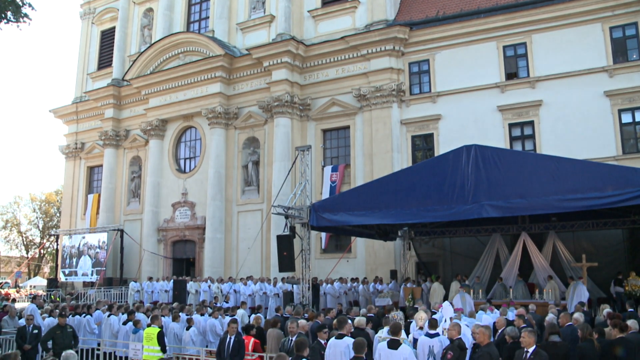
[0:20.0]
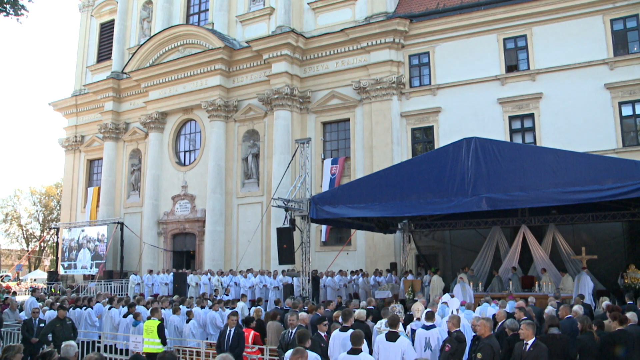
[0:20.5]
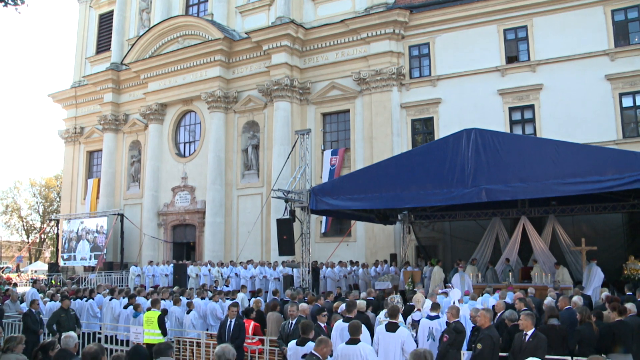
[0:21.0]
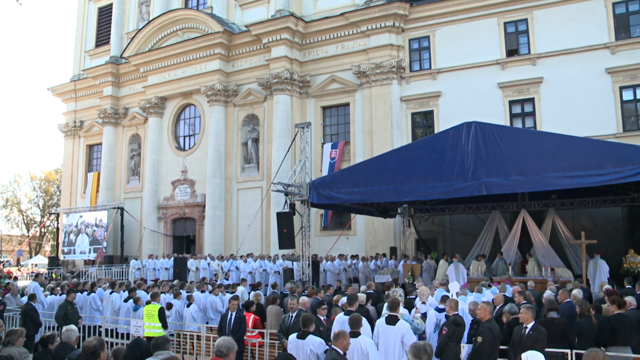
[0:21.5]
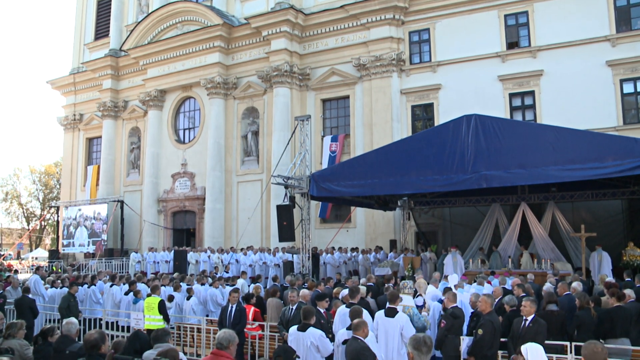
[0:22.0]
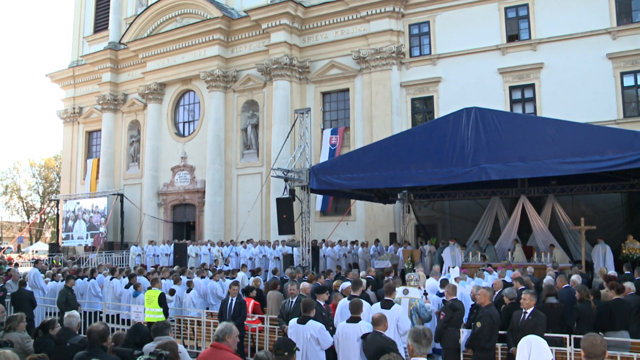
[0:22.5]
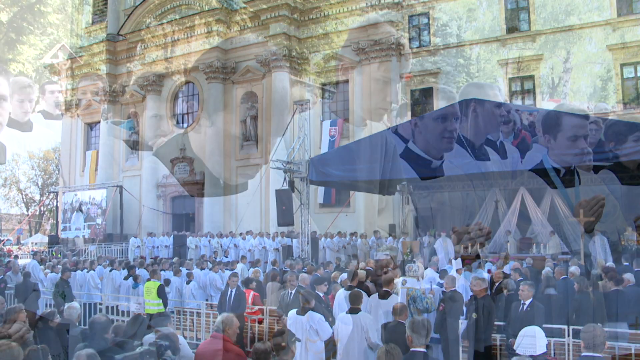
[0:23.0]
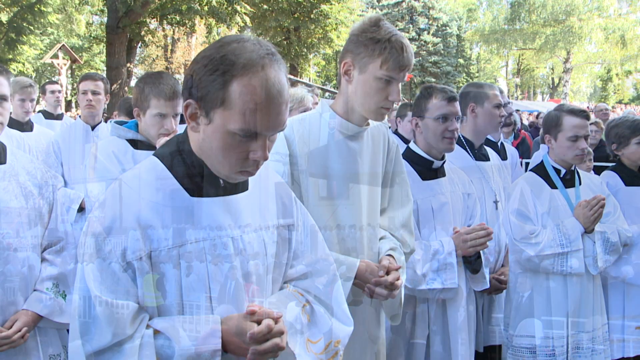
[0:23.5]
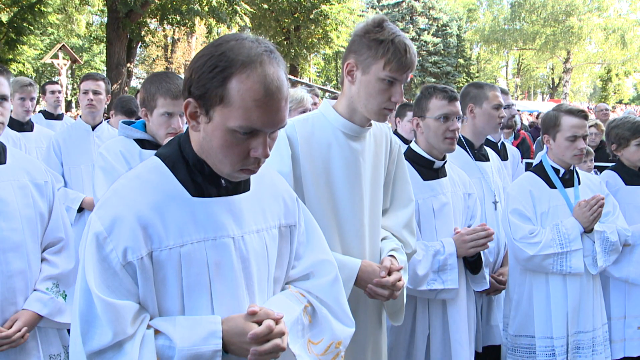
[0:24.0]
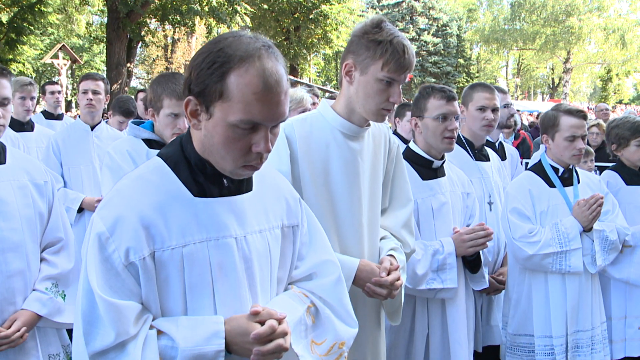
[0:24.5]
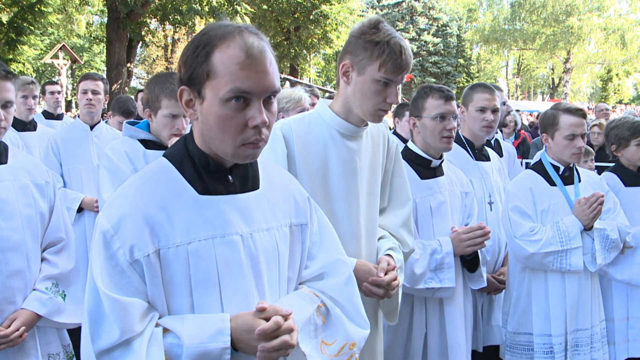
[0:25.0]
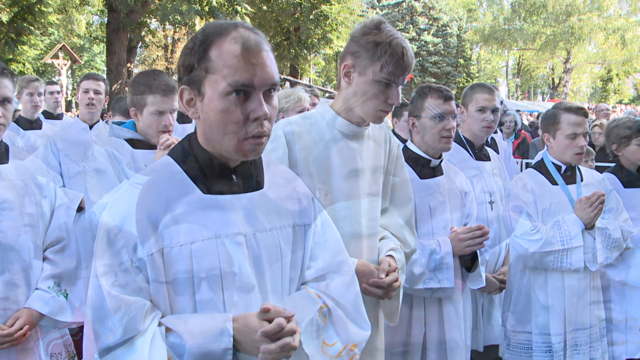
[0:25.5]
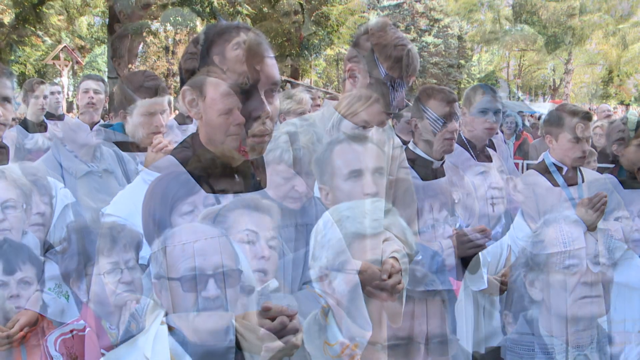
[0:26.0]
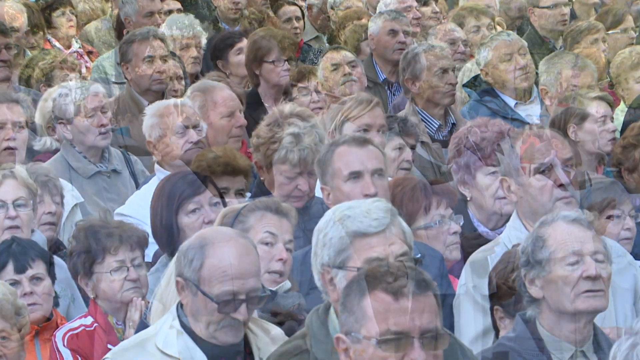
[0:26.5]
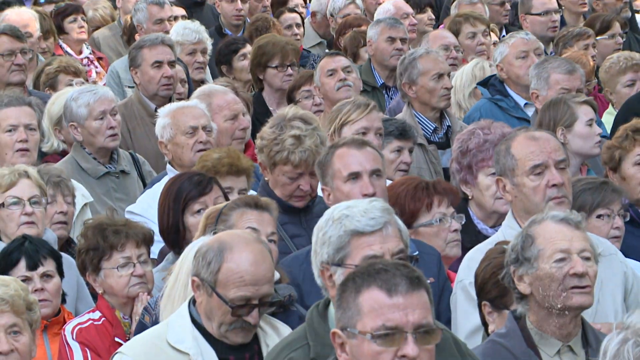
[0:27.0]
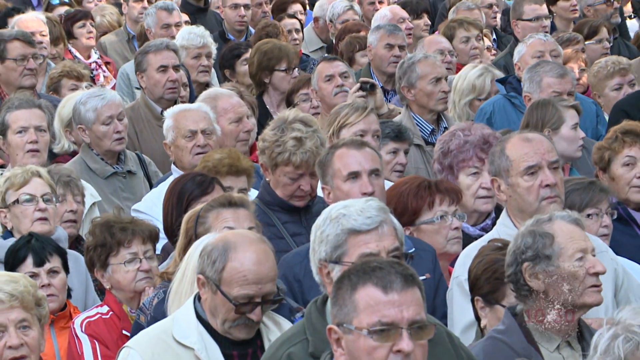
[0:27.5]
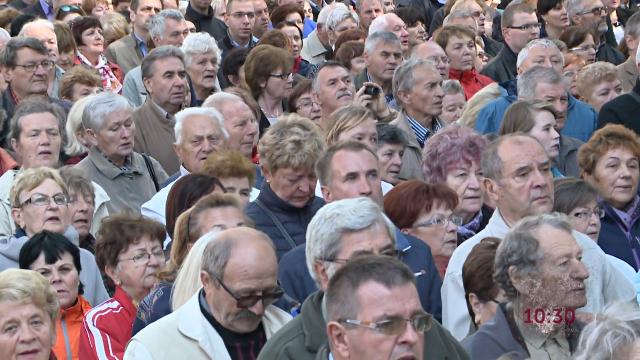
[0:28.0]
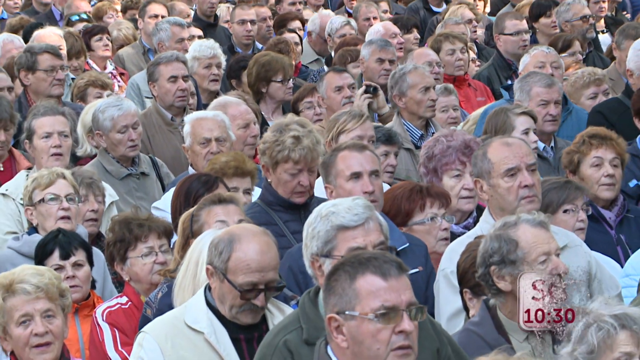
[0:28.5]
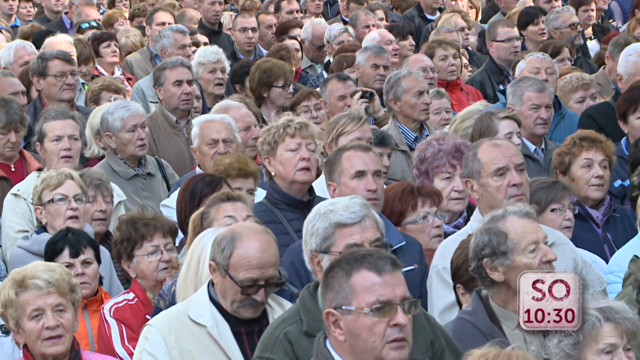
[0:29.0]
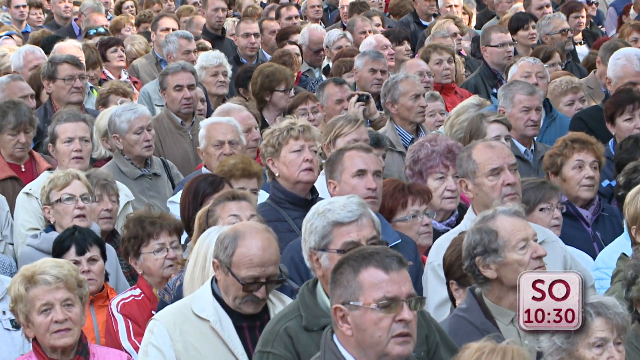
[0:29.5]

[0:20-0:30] The side of a really big building with at least three or four floors is visible; the windows are huge, leaving a lot of space from floor to ceiling. A monitor is on the left side of the building, and there are two flags: the one right above the monitor is white and yellow, and the one on the right side is red, white and blue. A bunch of people gather below, and there is a blue tent. Many men are wearing white, possibly clergy or men training to be clergy.